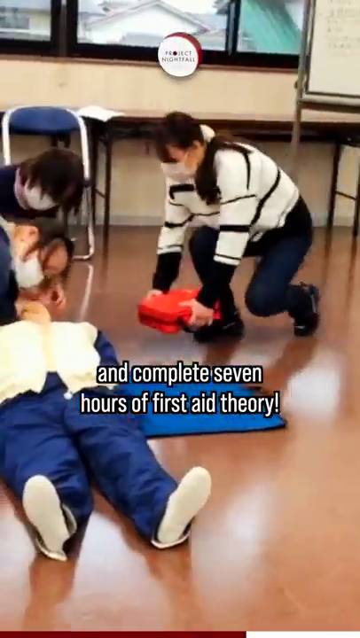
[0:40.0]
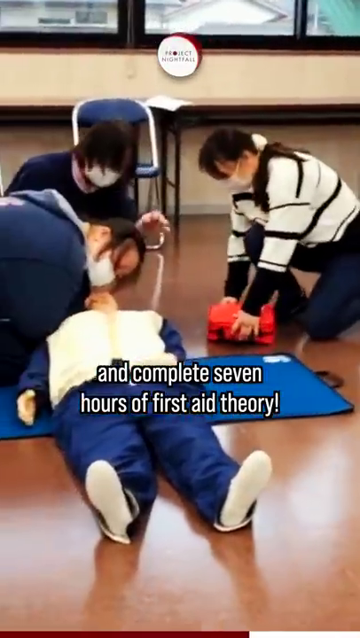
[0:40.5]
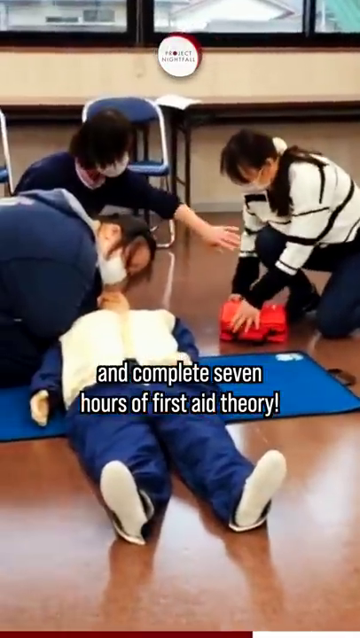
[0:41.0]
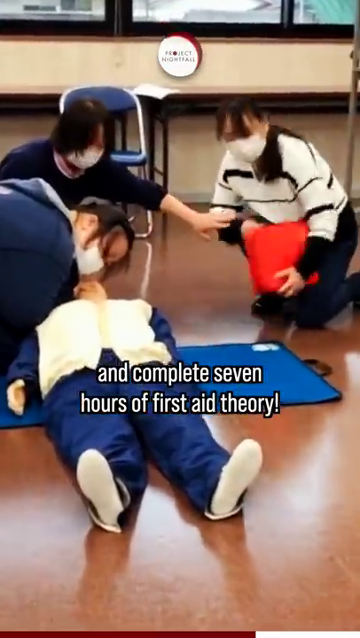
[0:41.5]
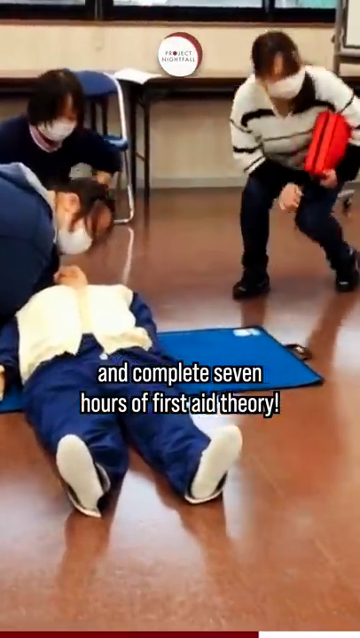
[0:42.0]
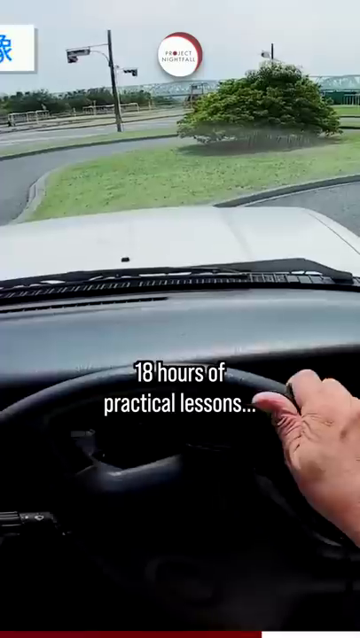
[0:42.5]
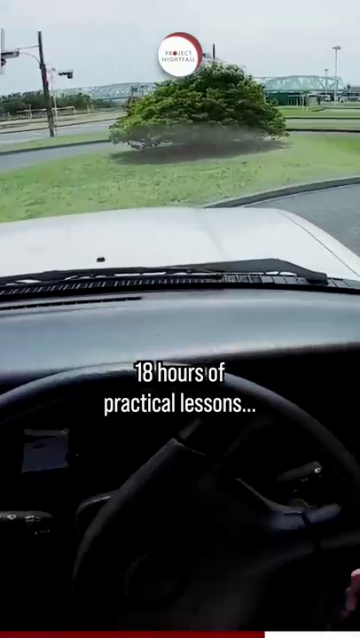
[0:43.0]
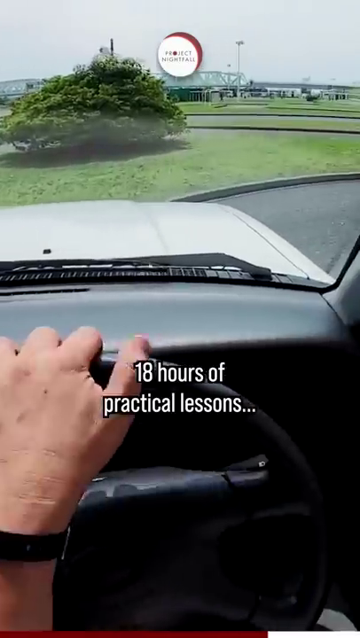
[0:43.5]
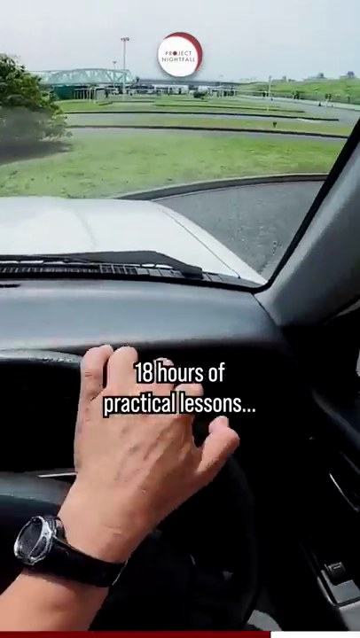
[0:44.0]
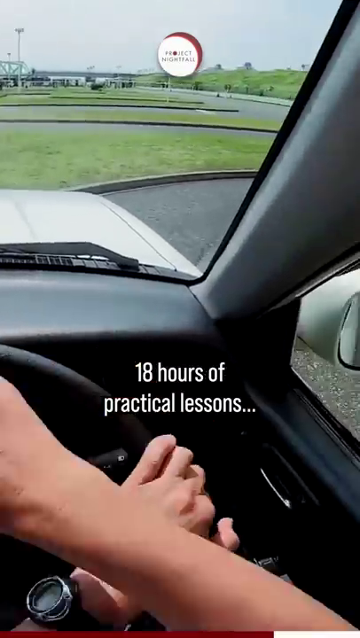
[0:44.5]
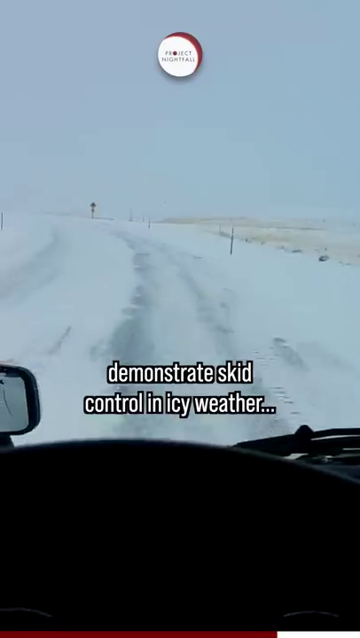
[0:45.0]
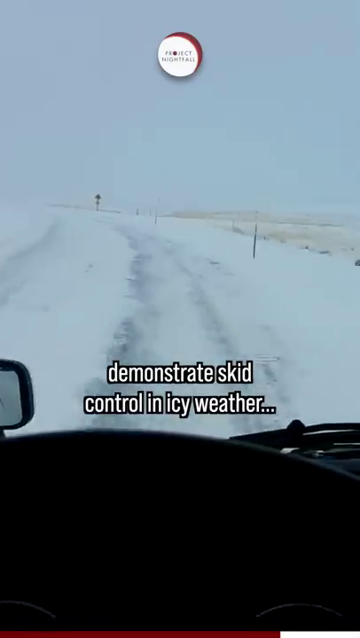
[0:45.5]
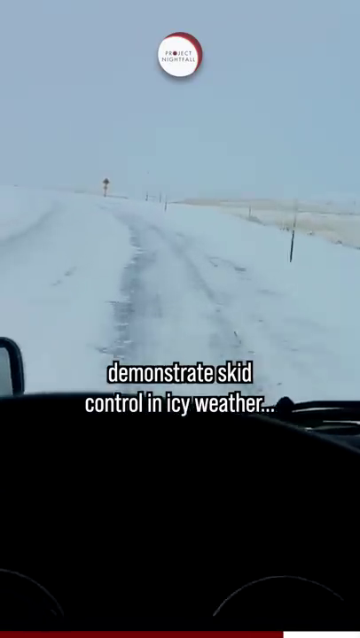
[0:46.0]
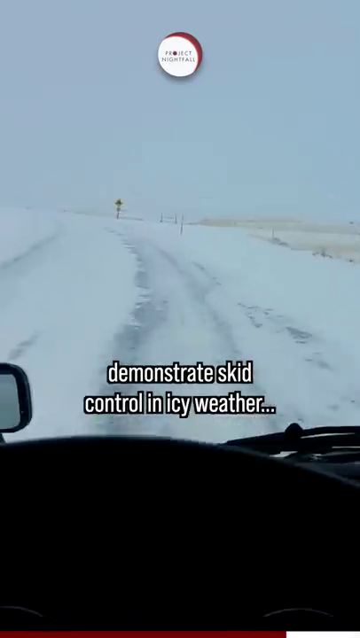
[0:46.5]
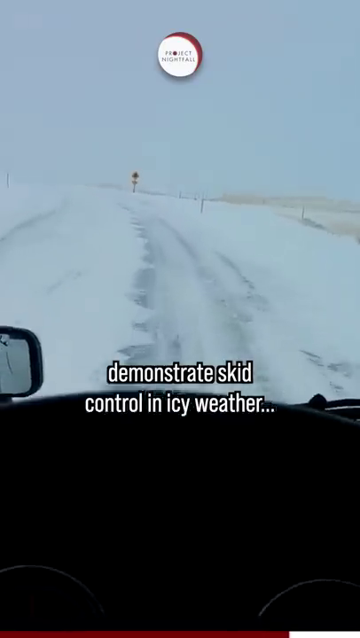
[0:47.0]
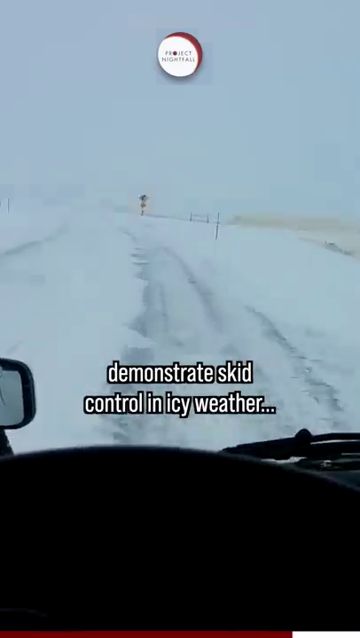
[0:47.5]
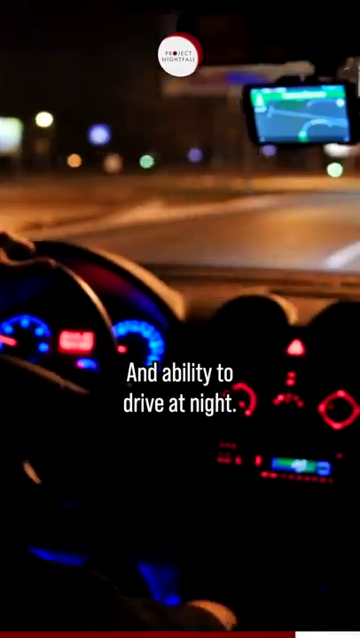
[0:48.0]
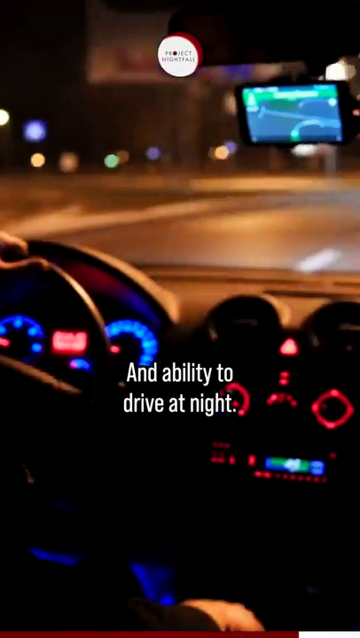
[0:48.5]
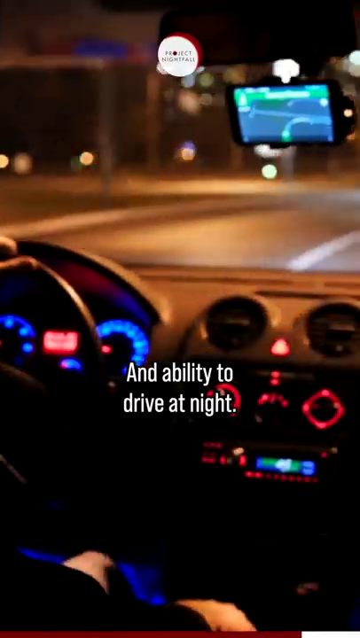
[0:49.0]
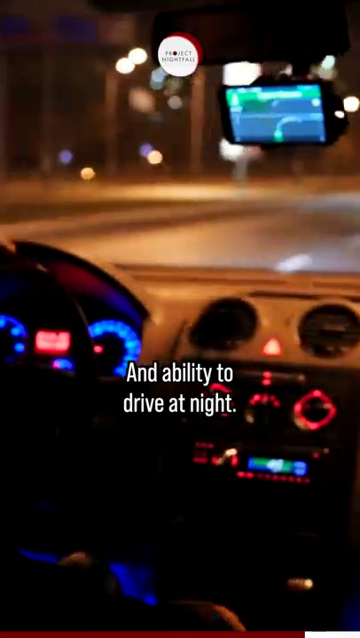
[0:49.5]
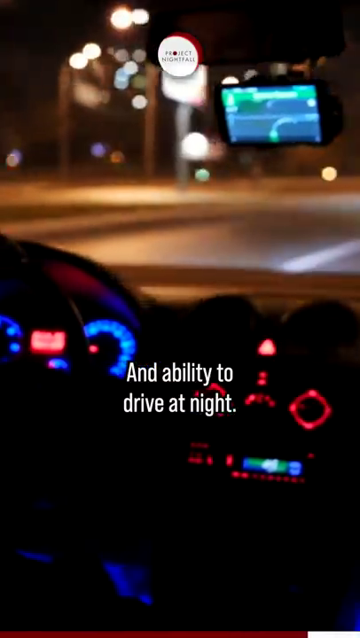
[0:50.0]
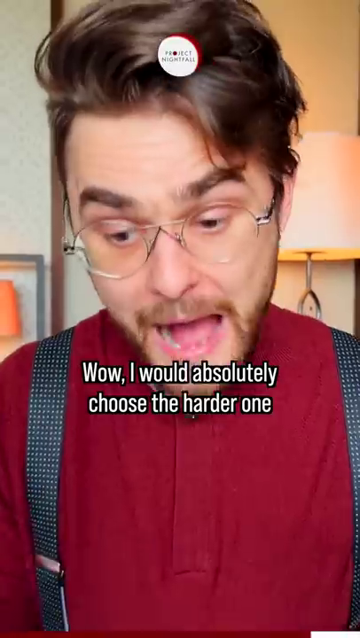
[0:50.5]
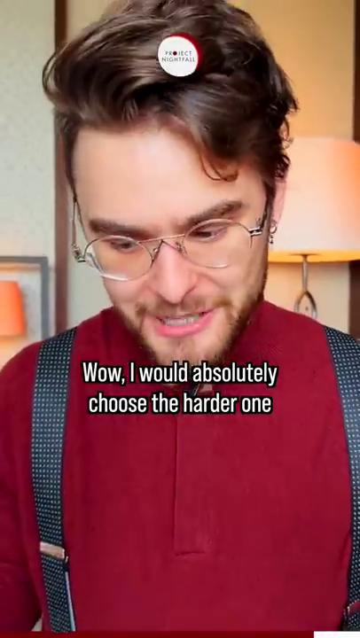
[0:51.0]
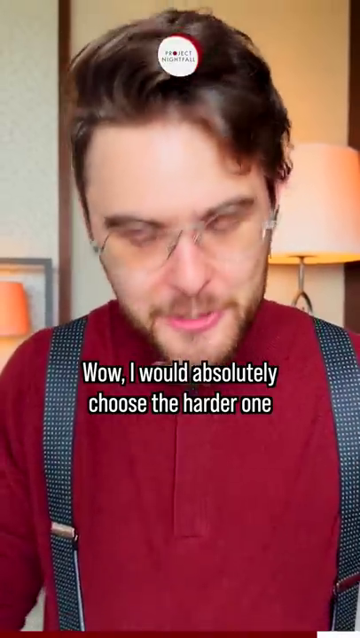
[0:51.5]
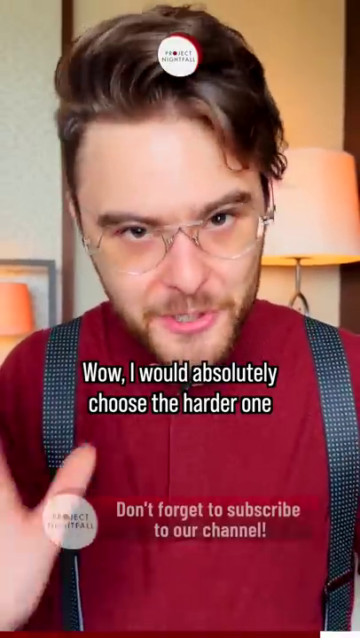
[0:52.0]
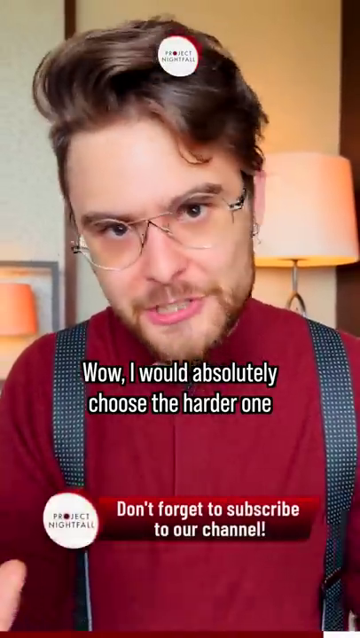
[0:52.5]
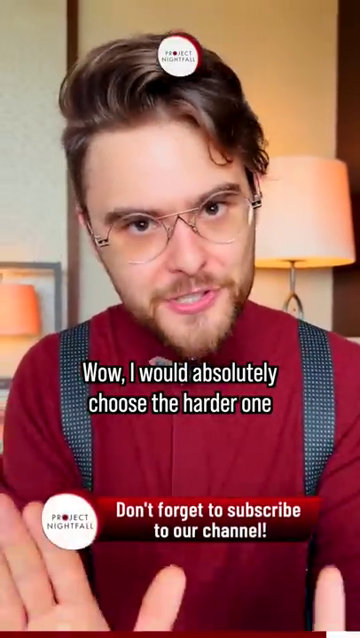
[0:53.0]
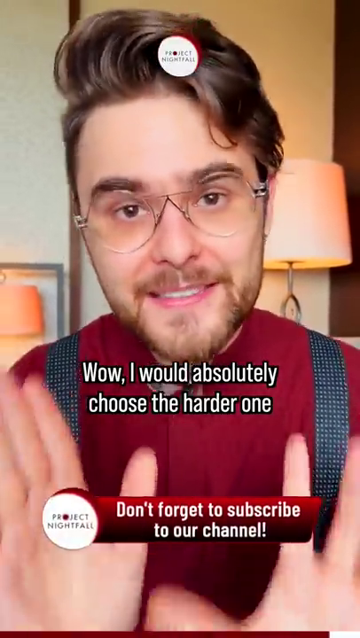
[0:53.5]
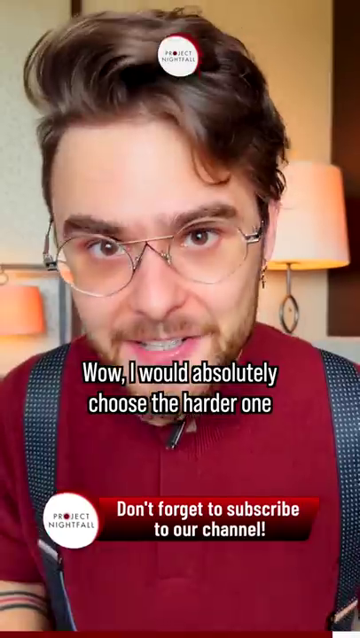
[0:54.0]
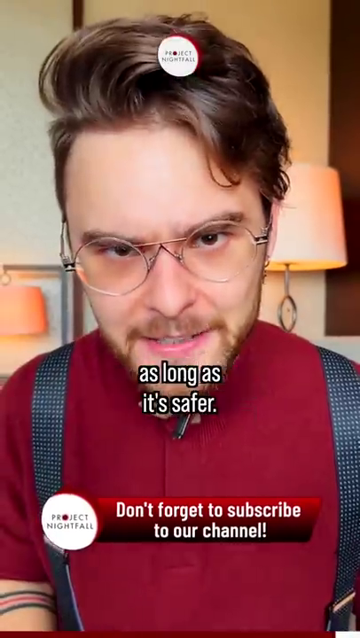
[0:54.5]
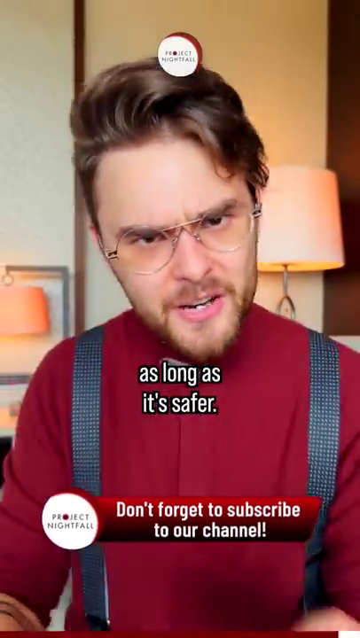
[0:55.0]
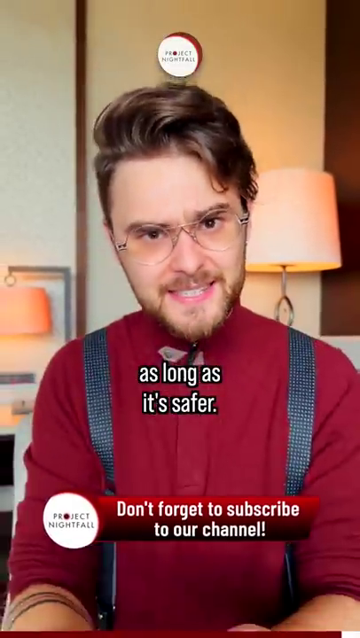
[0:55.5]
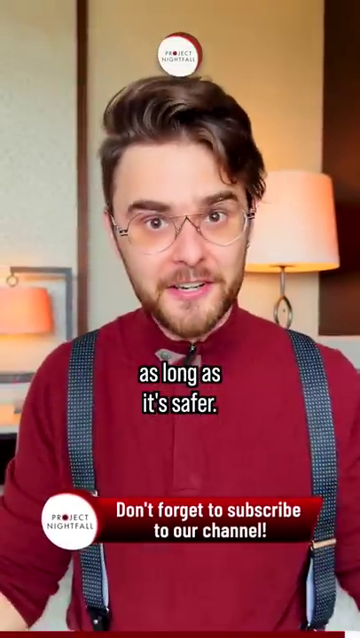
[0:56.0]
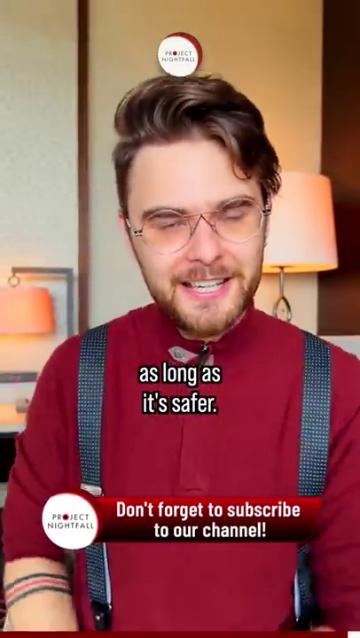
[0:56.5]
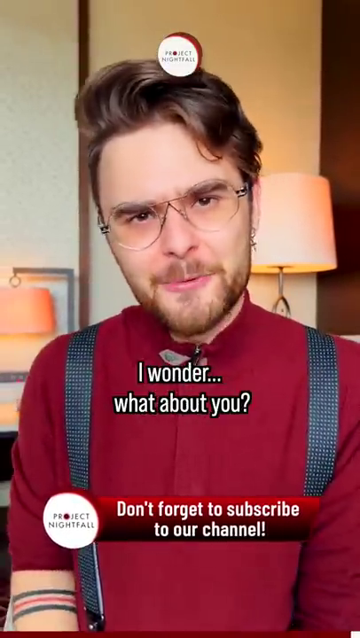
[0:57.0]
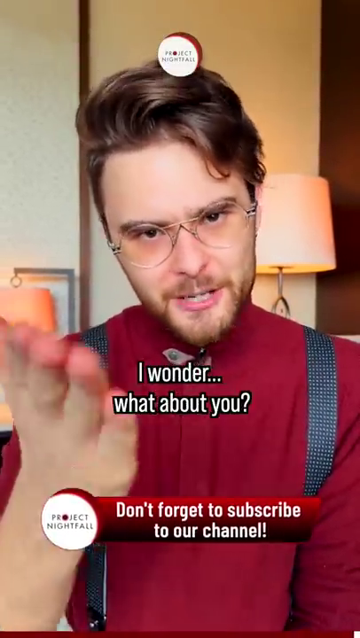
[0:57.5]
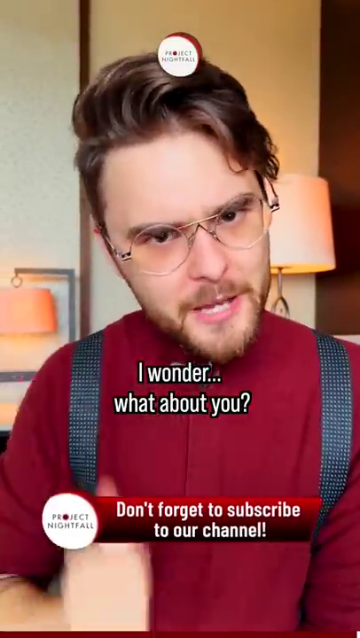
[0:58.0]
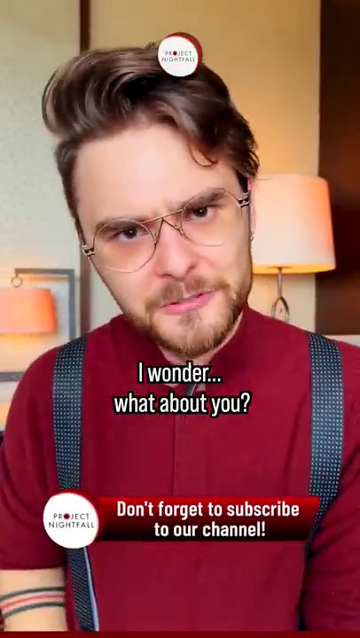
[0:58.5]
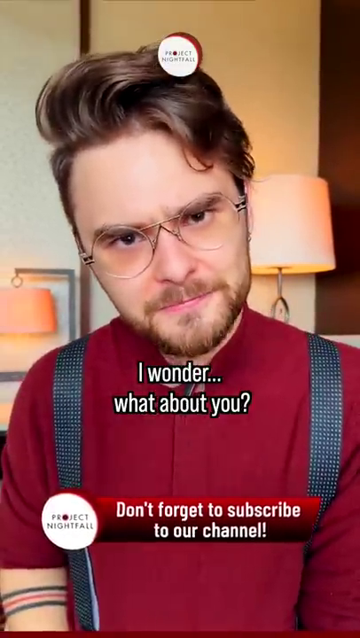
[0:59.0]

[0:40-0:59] The video shows the rigor some people go through to get a driver's license, such as seven hours of first aid, 18 hours of driving, and demonstrating the ability to drive on ice. There are scenes of each: someone doing first aid or CPR, someone driving, and someone driving on ice or in snowy conditions. The video then pans back to the host in burgundy and suspenders, who ends by saying he would choose the harder test as long as it is safer. Text then appears across the screen urging people to subscribe to his page and content.